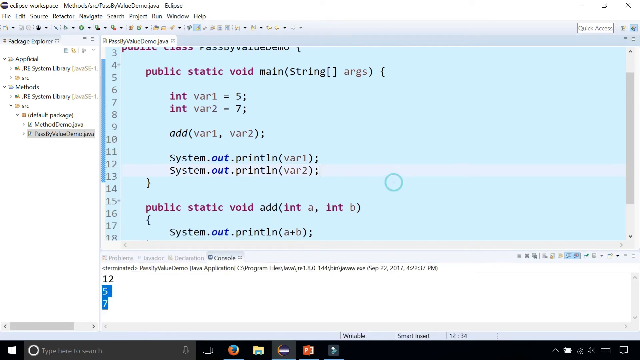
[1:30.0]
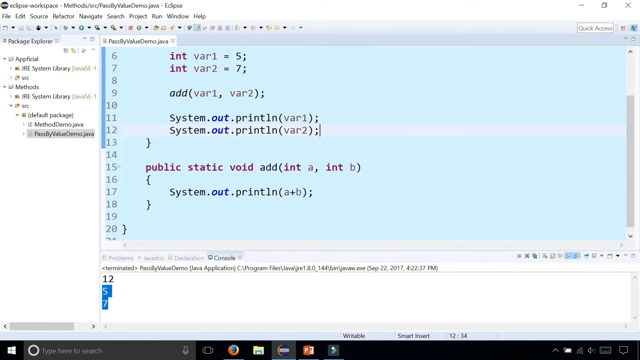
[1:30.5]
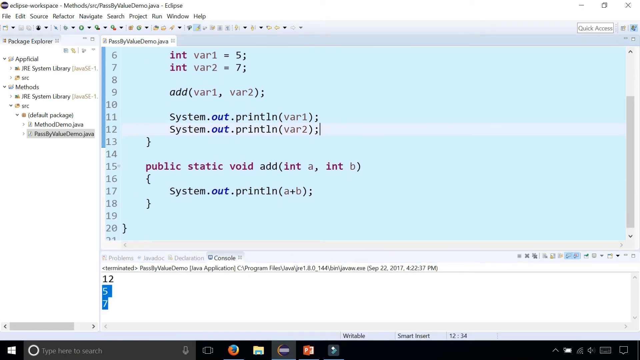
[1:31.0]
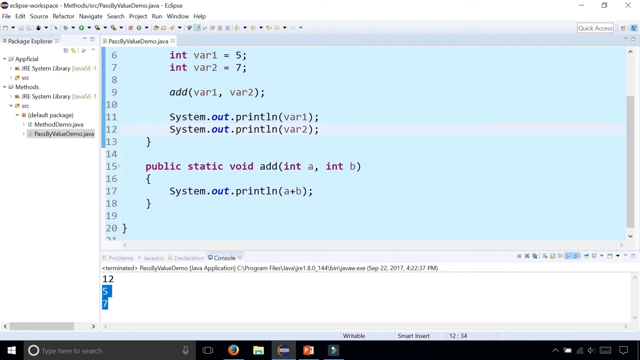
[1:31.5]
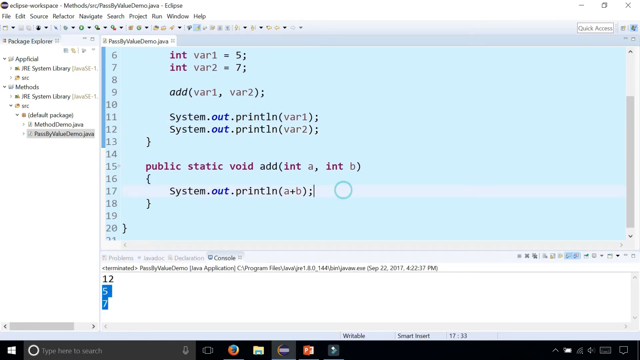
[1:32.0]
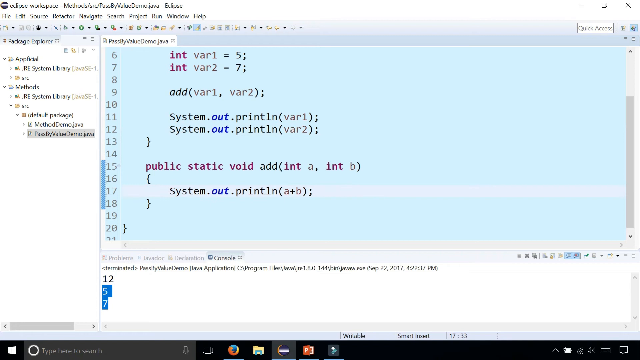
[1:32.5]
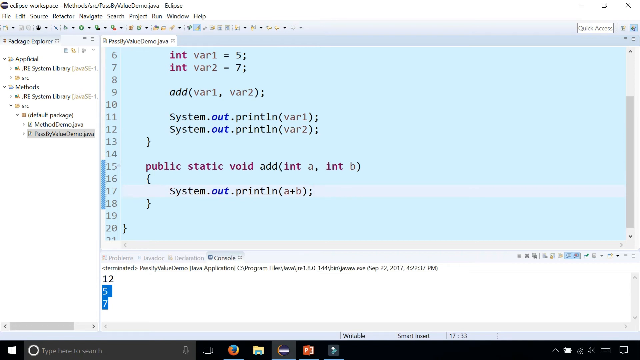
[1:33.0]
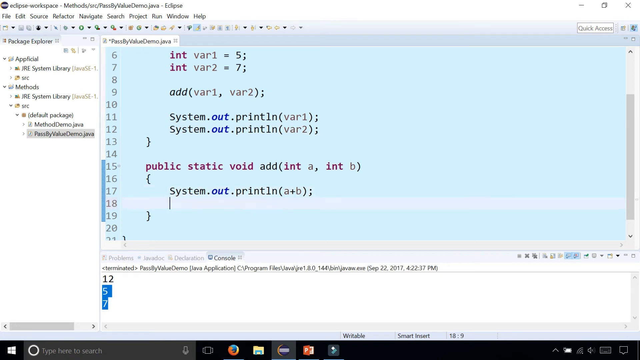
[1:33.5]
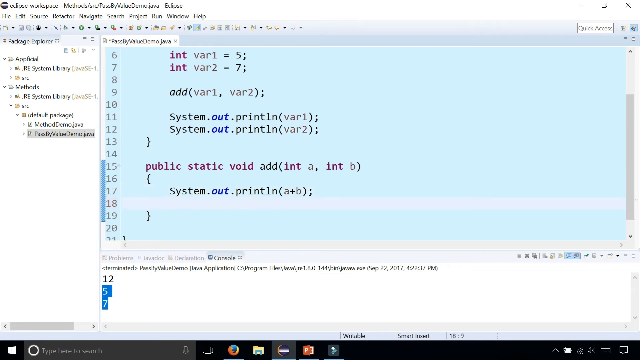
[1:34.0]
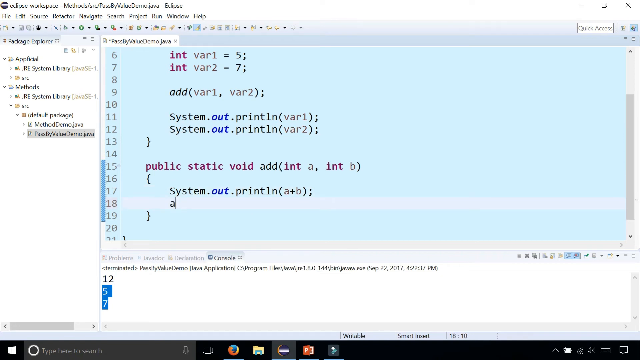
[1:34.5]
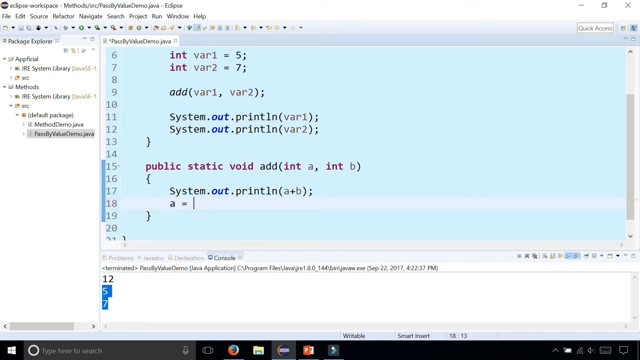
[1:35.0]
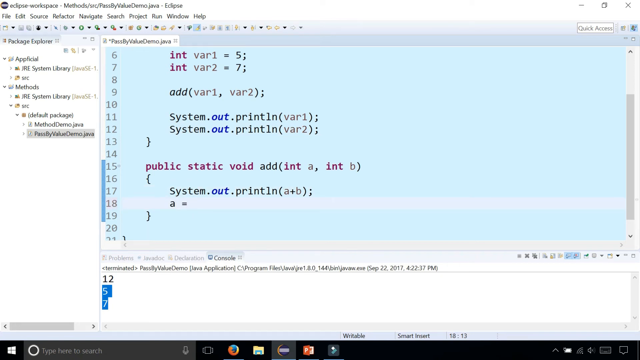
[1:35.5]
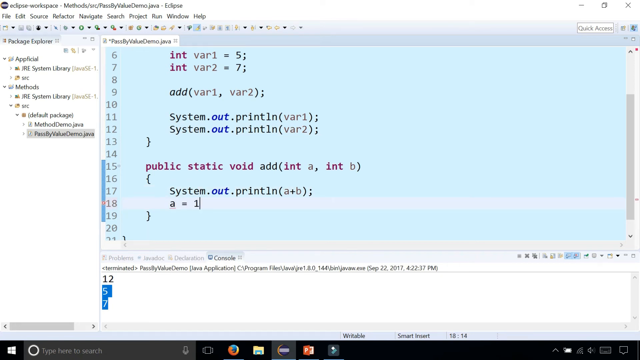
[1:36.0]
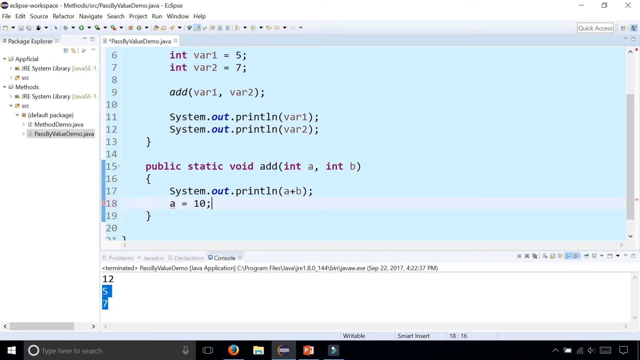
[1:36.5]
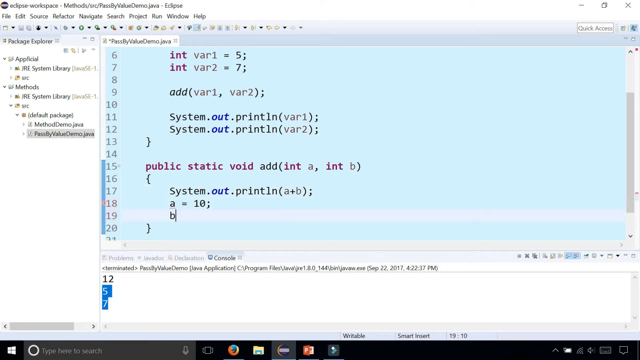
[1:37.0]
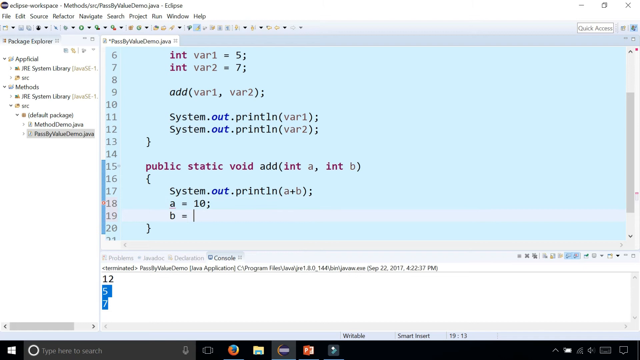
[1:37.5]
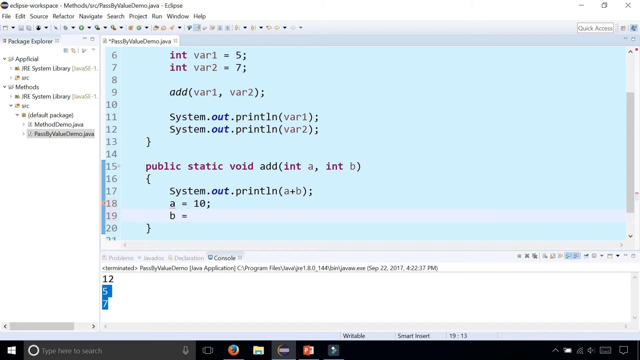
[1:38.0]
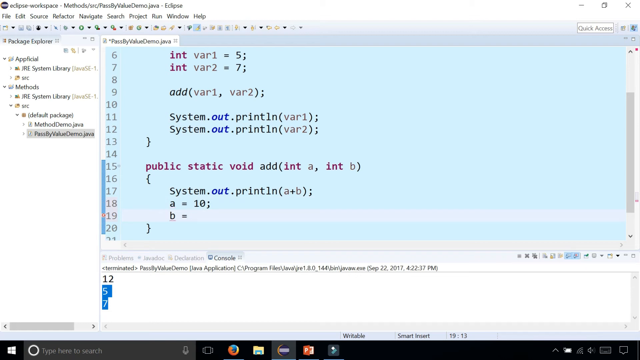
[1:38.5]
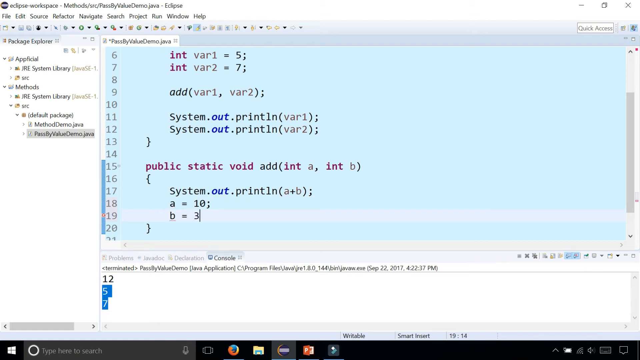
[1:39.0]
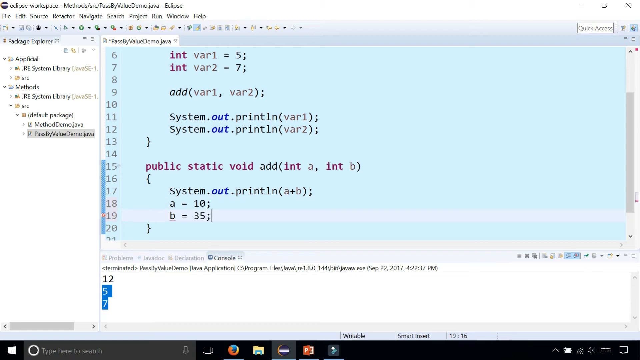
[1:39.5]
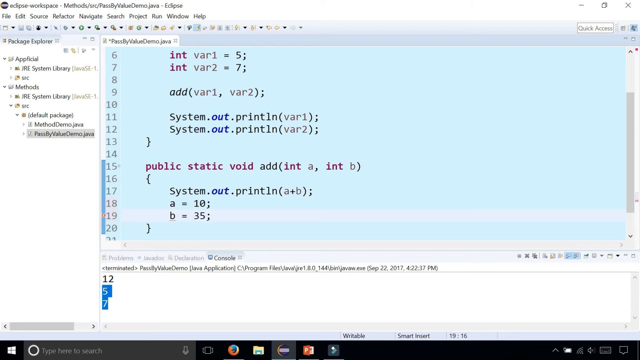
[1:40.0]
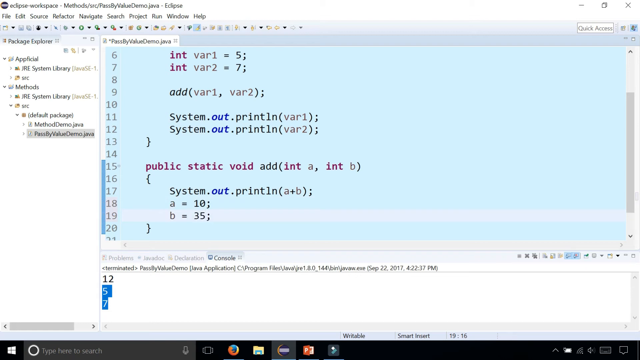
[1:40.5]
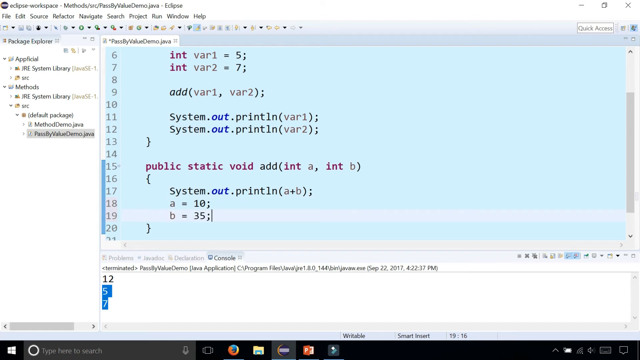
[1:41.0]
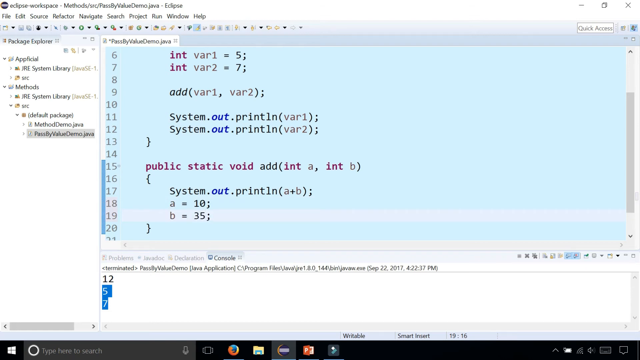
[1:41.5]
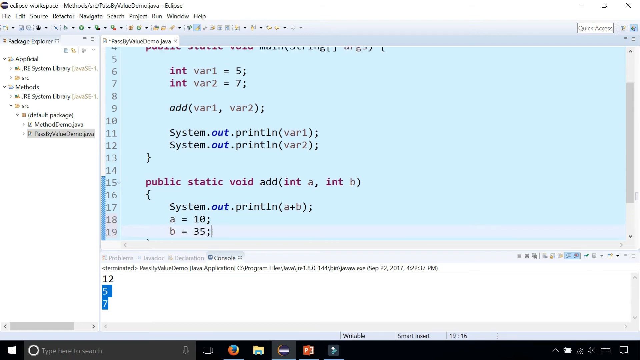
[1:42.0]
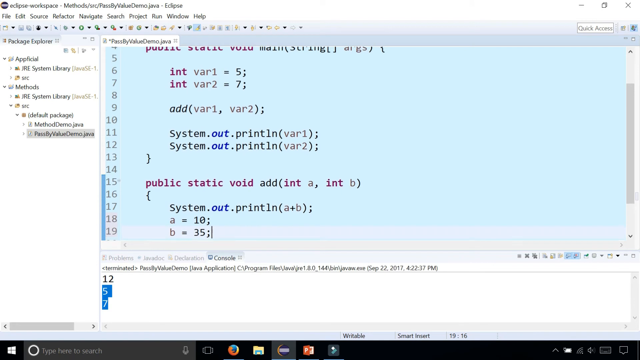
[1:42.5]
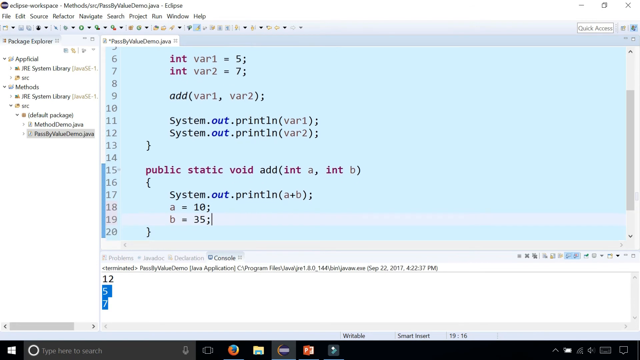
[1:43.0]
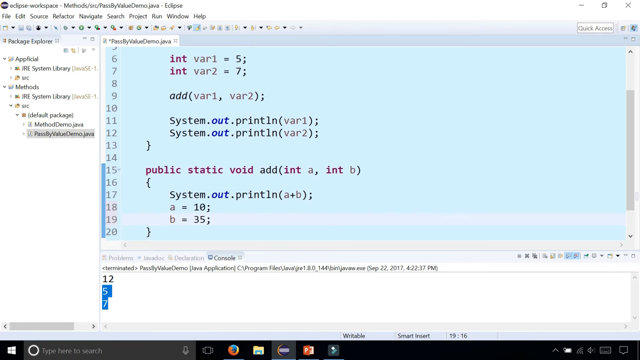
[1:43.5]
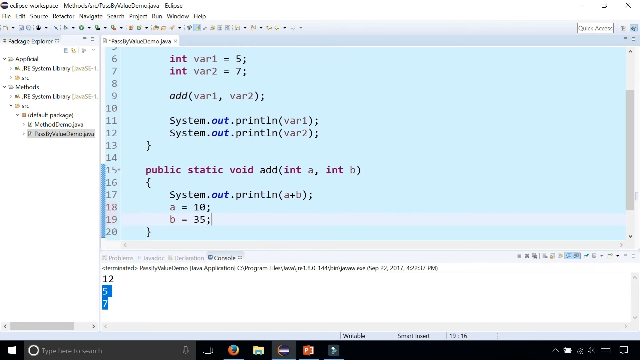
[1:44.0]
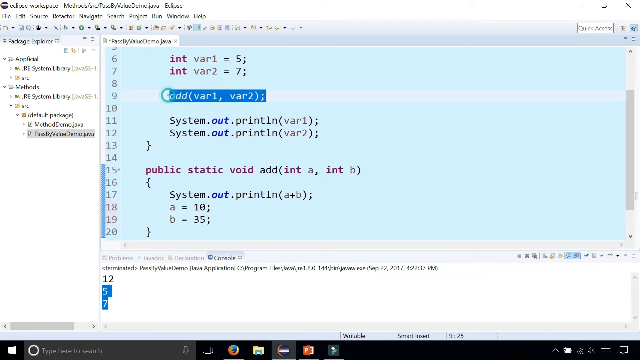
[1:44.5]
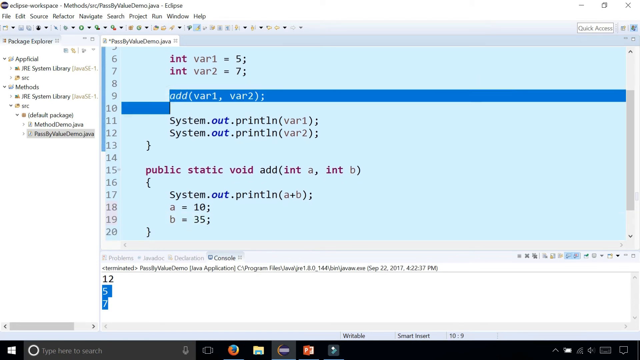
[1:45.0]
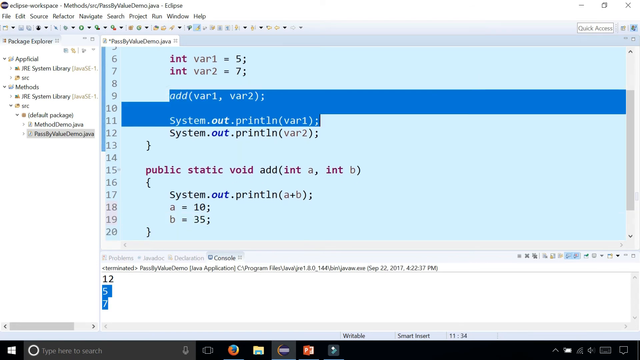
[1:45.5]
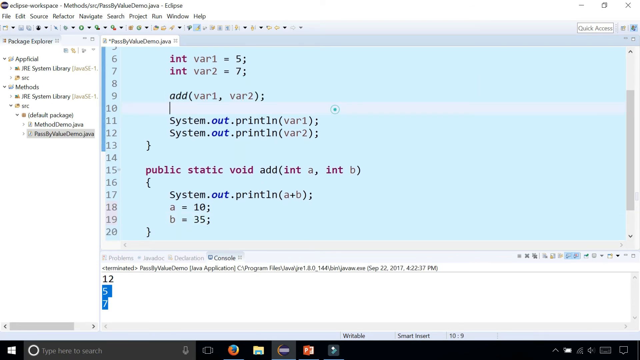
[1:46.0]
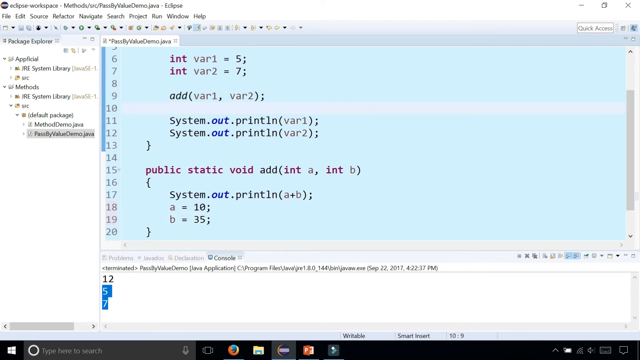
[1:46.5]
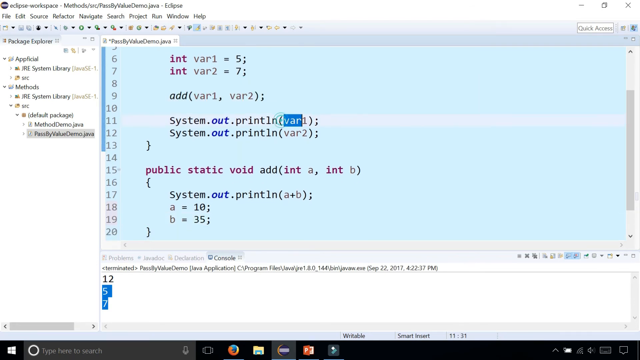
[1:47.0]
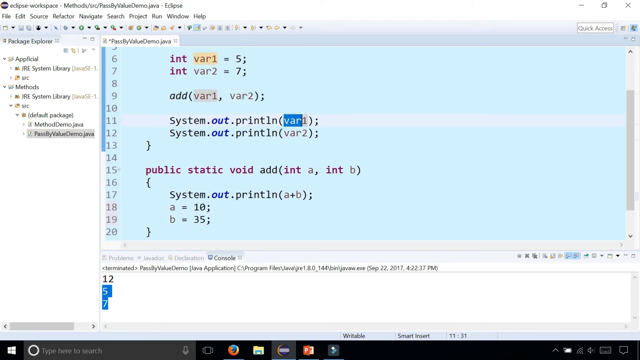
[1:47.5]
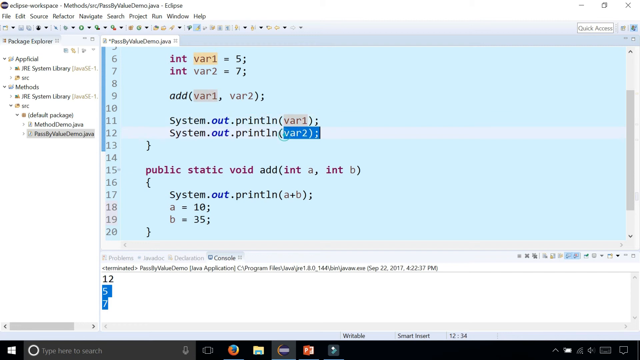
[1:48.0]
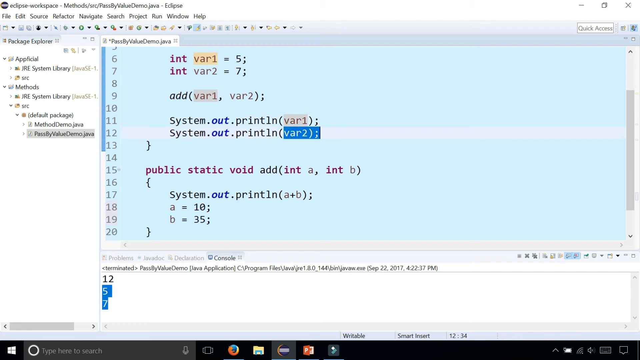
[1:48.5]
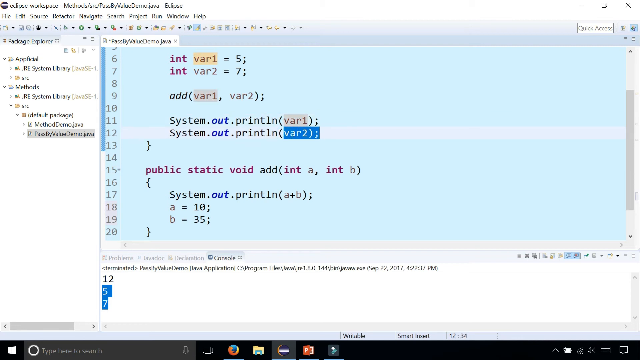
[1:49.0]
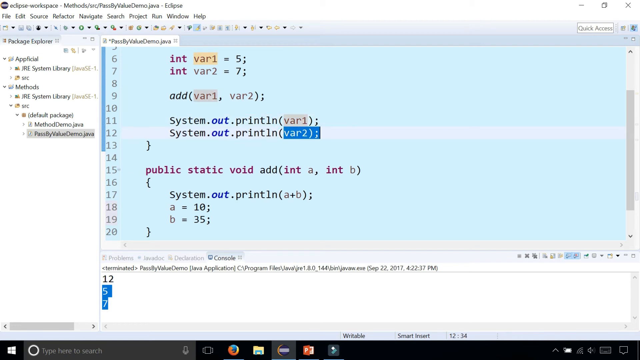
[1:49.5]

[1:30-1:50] In the program Eclipse Workspace, someone types instructions into an inset screen, scrolls down and continues adding a = 10; and b = 35;. They highlight a portion of the var1 and var2 text. A typical menu runs across the top: File, Edit, Source, Refactor, Navigate, Search, Project, Run, Window, Help. A vertical menu tree along the left lists Package Explorer, JRE System Library, Default Package and PassByValueDemo.java, among other items. The center shows code such as public static void main(String[] args), int var1 = 5, int var2 = 7, add(var1, var2), System.out.println(var1);, System.out.println(var2);, public static void add(int a, int b) and System.out.println(a + b);. A screen at the bottom shows 12, 5 and 7.